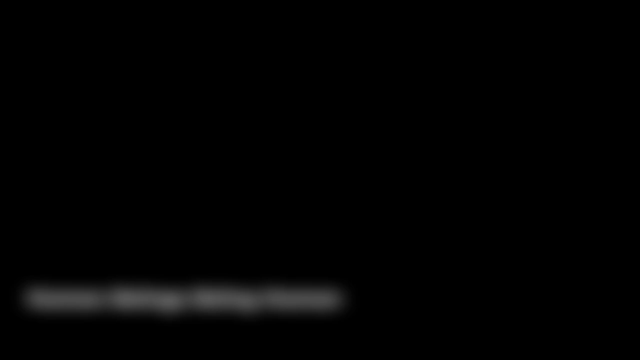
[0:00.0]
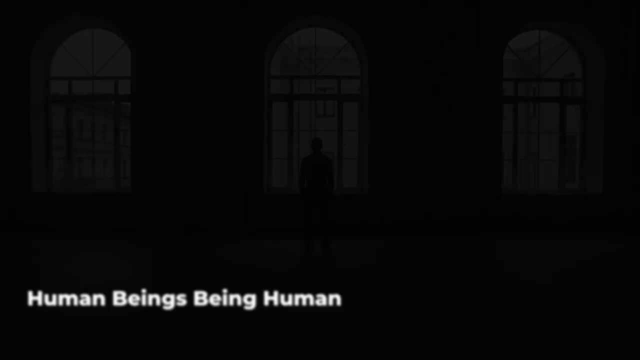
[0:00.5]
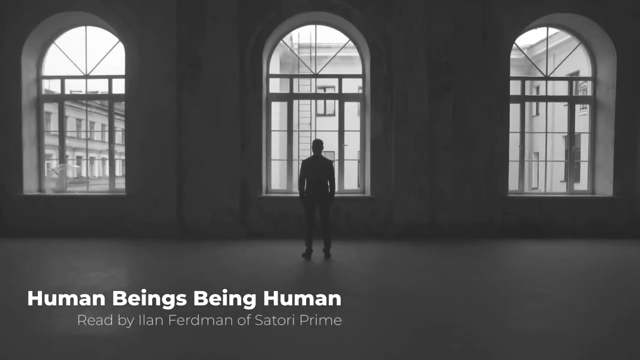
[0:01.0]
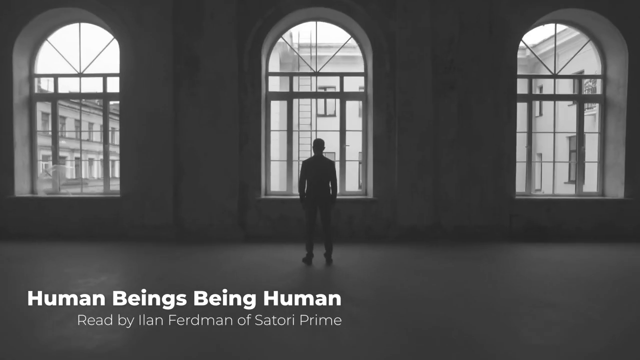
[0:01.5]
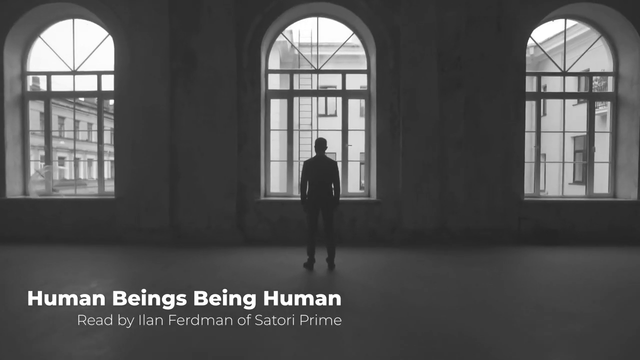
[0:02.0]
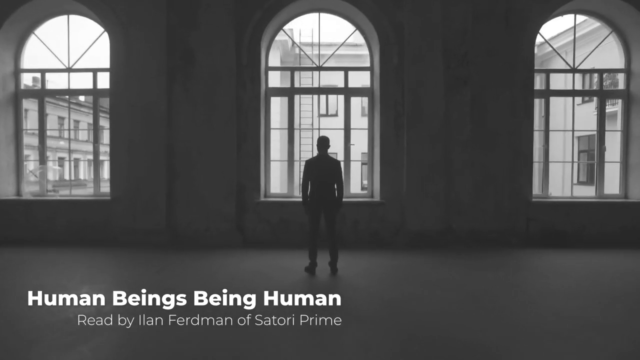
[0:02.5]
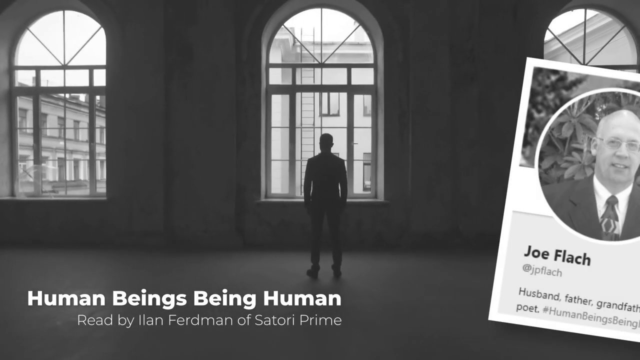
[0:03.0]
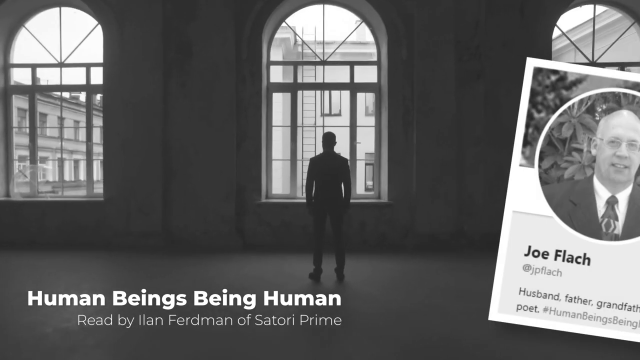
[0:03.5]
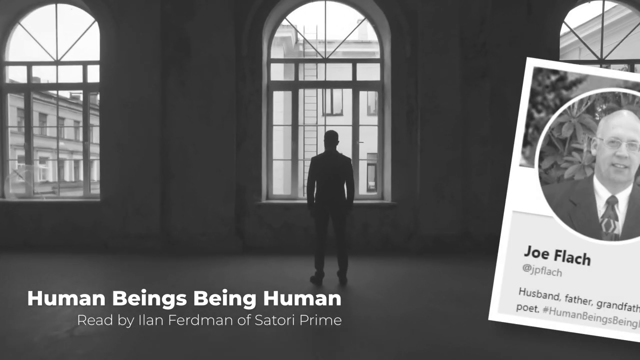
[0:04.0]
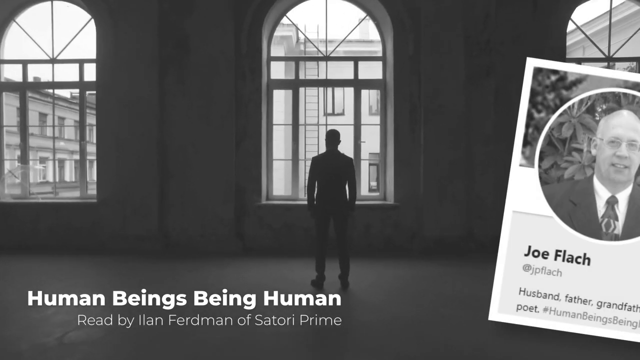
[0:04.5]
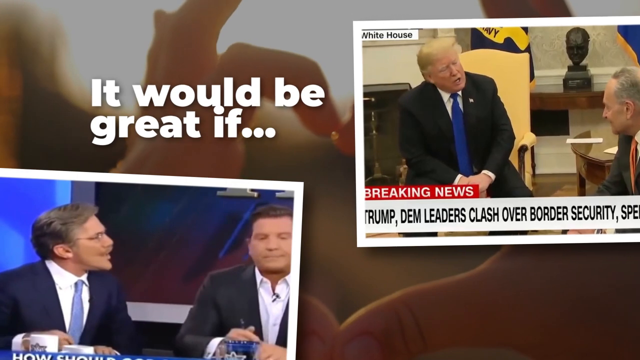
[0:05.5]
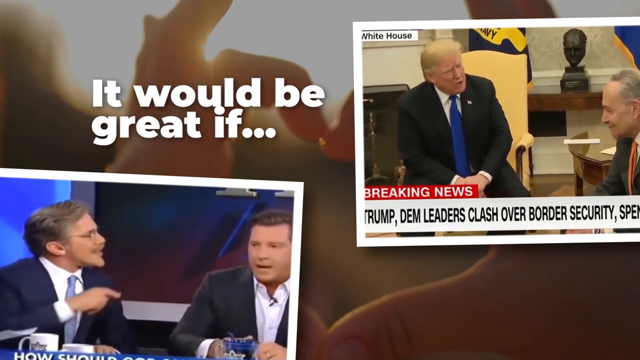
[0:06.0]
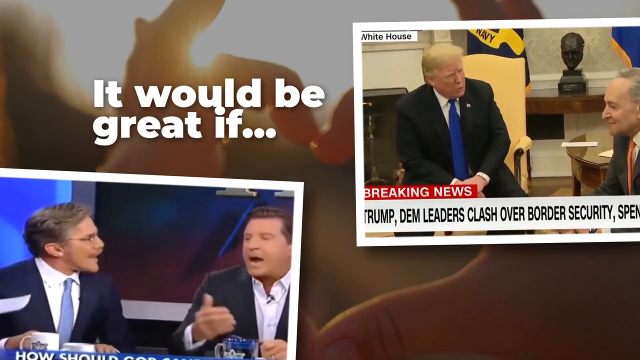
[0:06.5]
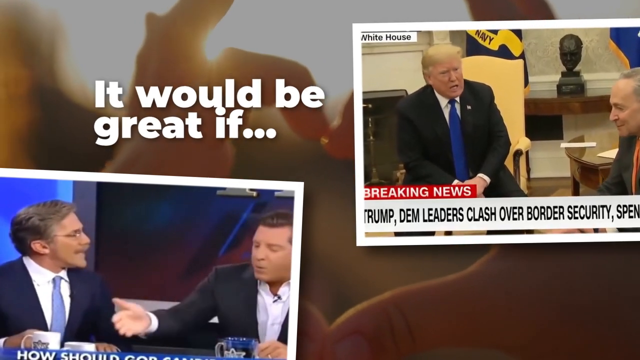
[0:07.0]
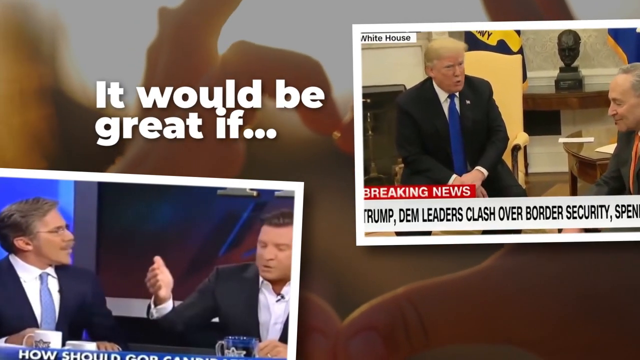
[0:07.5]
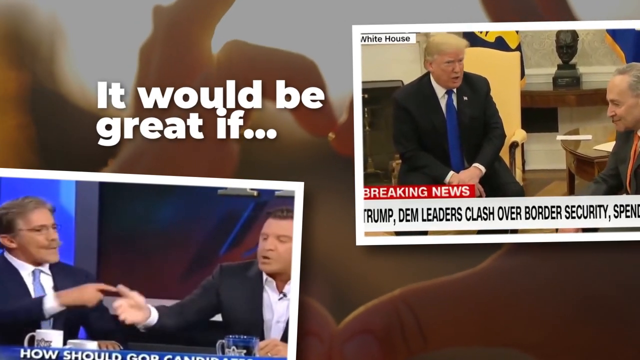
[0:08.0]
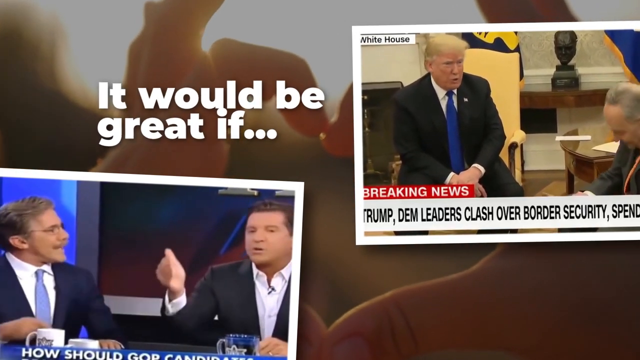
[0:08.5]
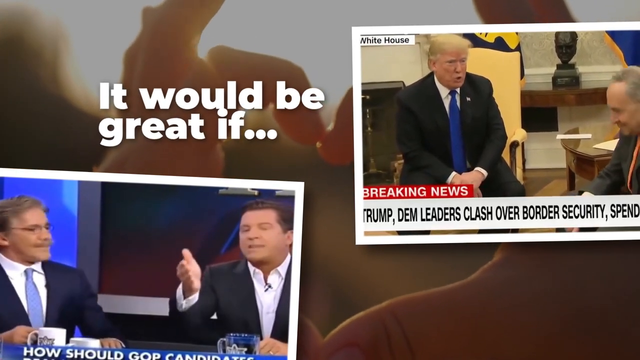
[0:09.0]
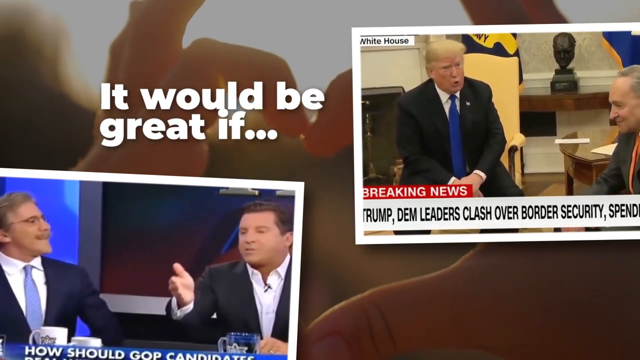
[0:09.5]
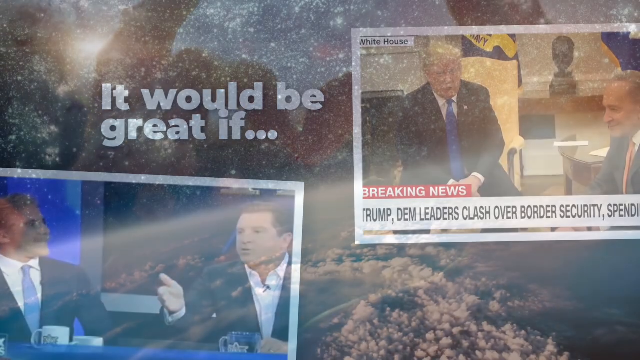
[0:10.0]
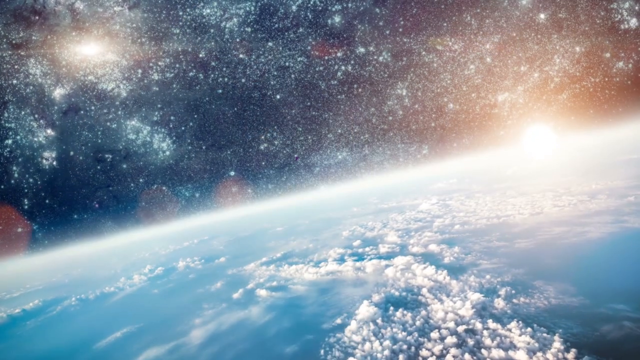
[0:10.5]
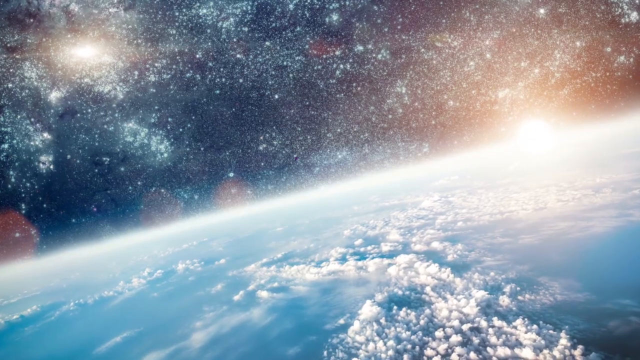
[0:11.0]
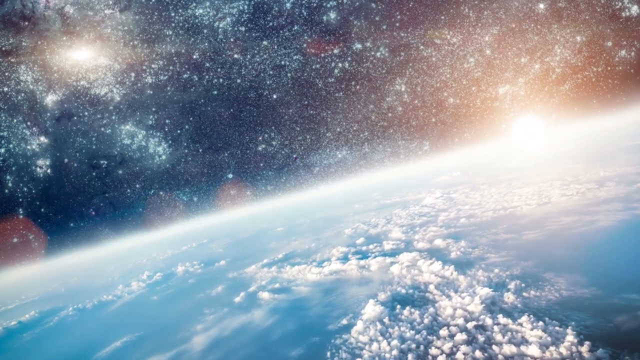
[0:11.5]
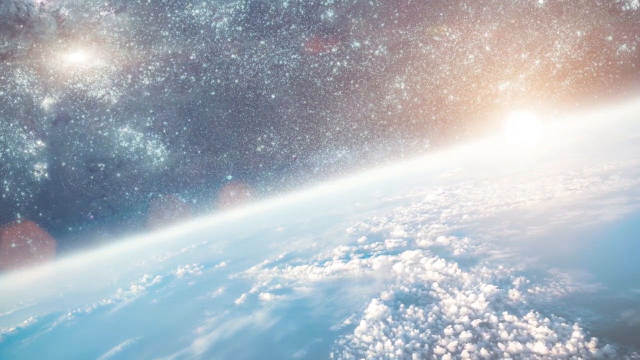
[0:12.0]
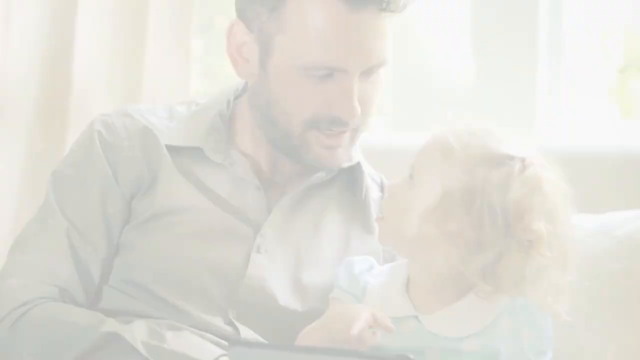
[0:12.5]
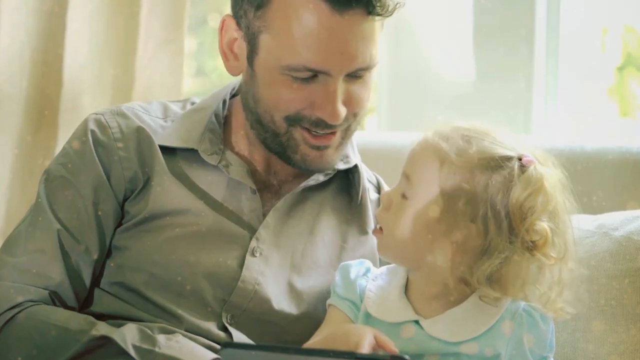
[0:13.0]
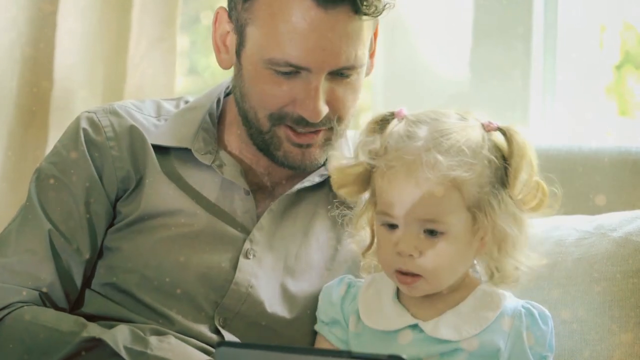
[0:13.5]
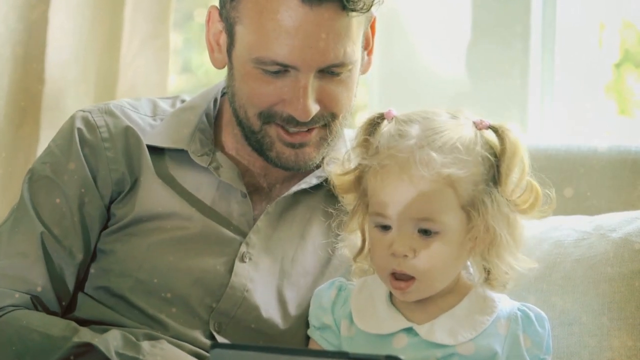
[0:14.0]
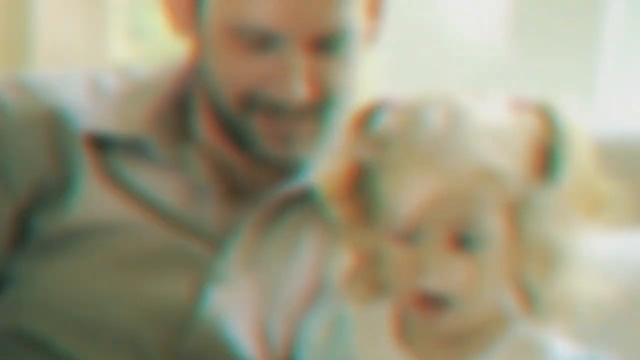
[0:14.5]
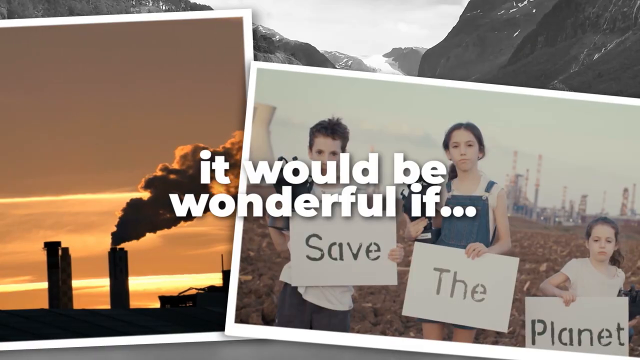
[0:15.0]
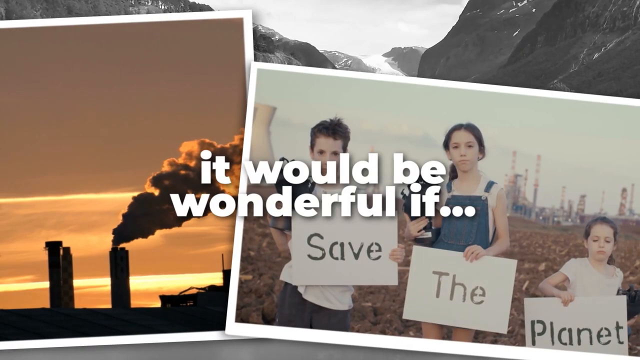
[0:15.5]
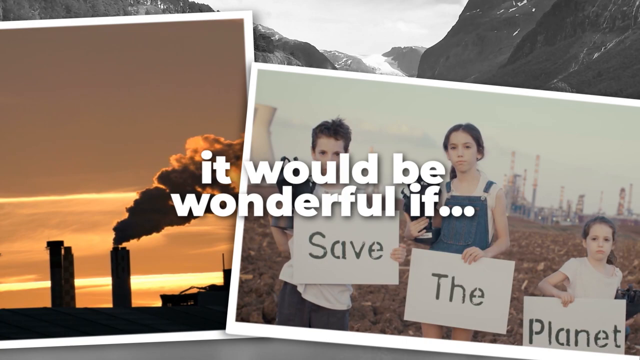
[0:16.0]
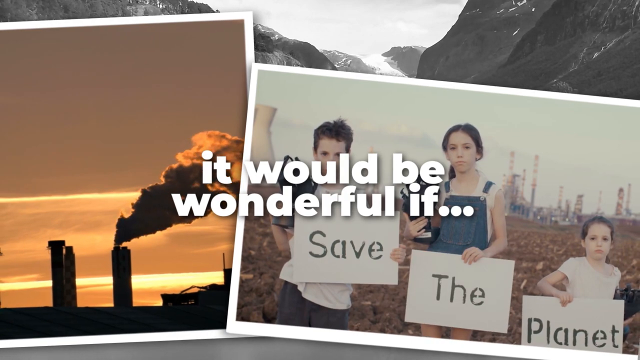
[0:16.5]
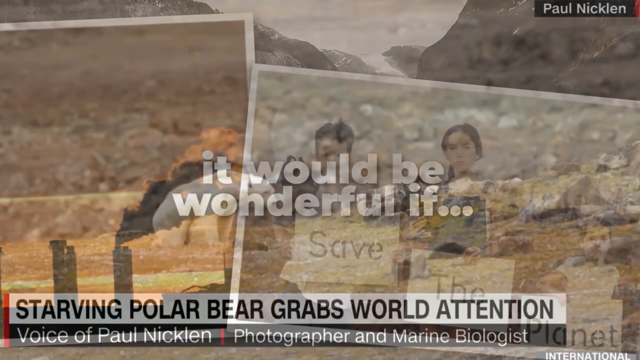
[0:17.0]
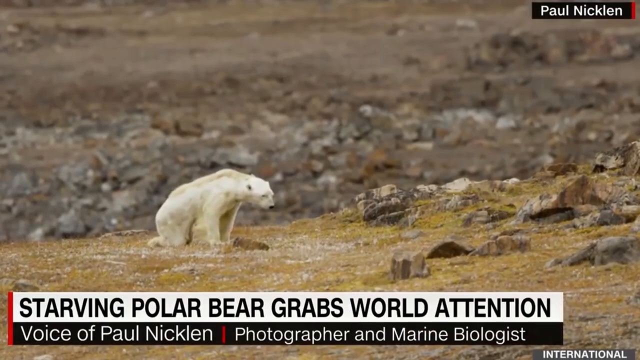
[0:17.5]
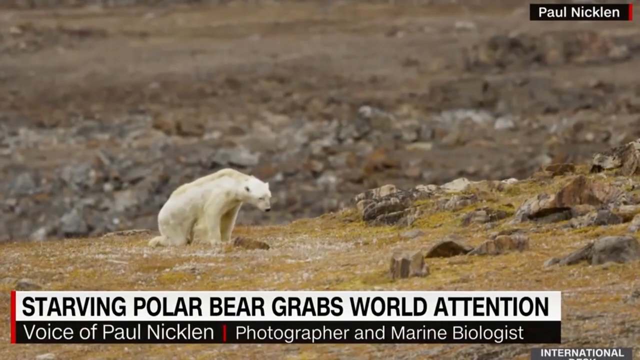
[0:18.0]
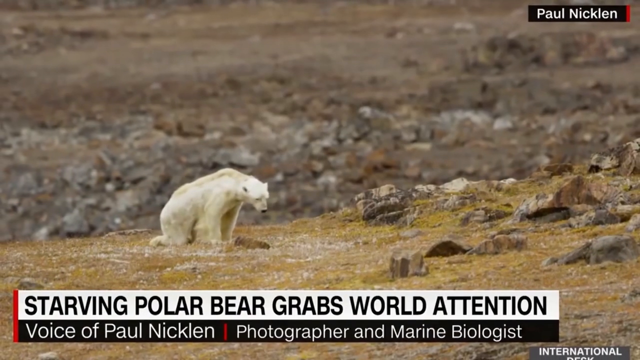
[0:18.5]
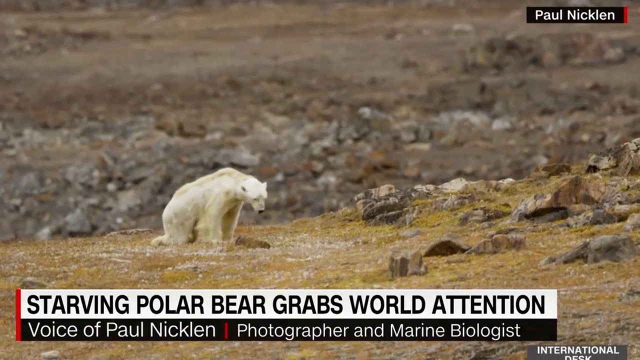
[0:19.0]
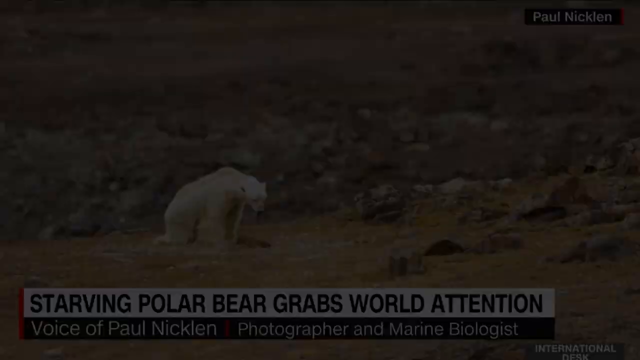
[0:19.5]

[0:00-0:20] The video fades from black into a grayscale view of the inside of a building with three large arched windows. A male stands in the middle, looking through the window, and behind the middle window there appears to be a ladder. In the bottom left, text reads "human beings being human", and underneath it says "read by Ilan Ferdinand of satori prime". The camera moves and pans forward. On the right-hand side is a circular grayscale photo avatar of a male in glasses wearing a suit and a tie. Underneath is his profile information: "Joe Flach", then a handle, then "husband father grandfather poet" and the hashtag "#humans beings being". The scene fades to black. A montage follows, with news TV clips in the bottom left and the top right. The one in the top right shows Donald Trump sitting down, talking to someone; the one in the bottom left shows two people in suits. White text reads "it would be great if...". In the background is a zoomed-in picture of the sun and of a person making a heart symbol with both hands. Next comes a brief shot of the Earth, with lots of stars and lights at the top, the sun on the right-hand side of the horizon, and clouds at the bottom; the image rotates slightly. A bright transition leads into a clip of a male and a small girl sitting on a settee or couch. The male wears a light grayish shirt, and the girl wears a blue dress with a white collar. In the background is a window with light shining through it. The girl's head rotates to the left. Another transition leads to text in the middle reading "it would be wonderful if", with two photo frames containing video clips in the background. In one, three people hold a sign saying "save the planet", with "save the planet" underneath; they stand in front of a power plant, with chimneys on the left-hand side and, on the right-hand side, one with smoke billowing out of it. It is sunset, and there are mountains in the background of all of this. Next is a news story showing a polar bear on some grass, with rocks in the background and on the right-hand side. A ticker says "starting polar bear, grabs world attention", and underneath it says "voice of Paul Nicklin, photographer and marine biologist". A caption in the top right says "Paul Nicklin".